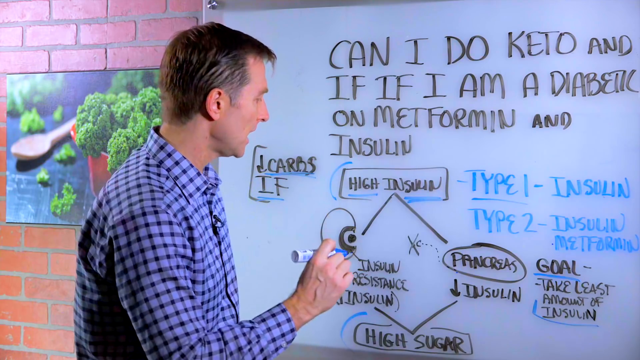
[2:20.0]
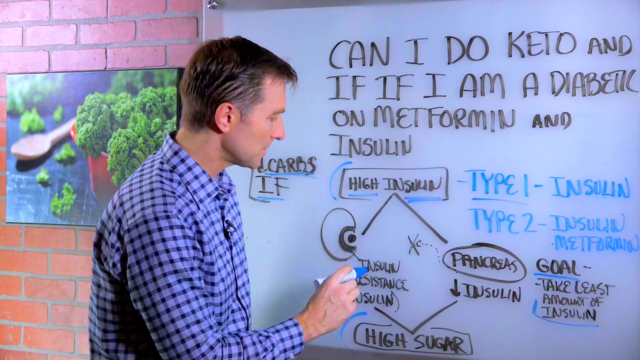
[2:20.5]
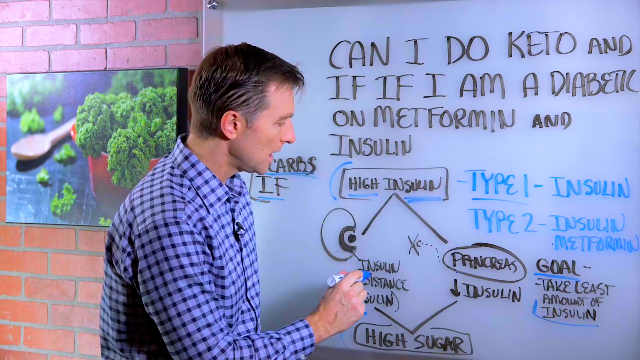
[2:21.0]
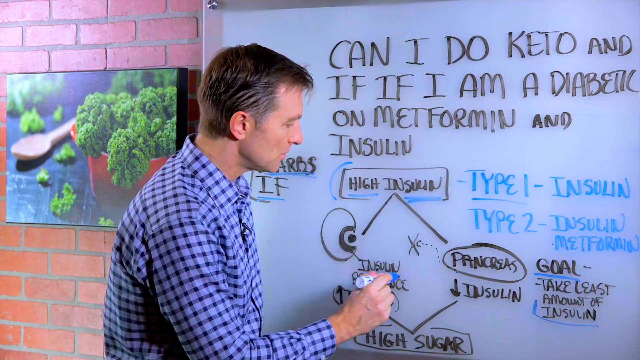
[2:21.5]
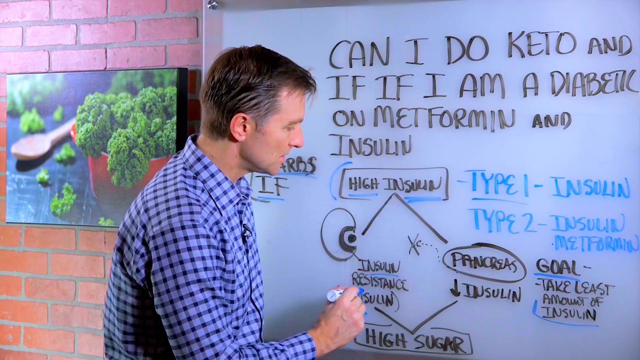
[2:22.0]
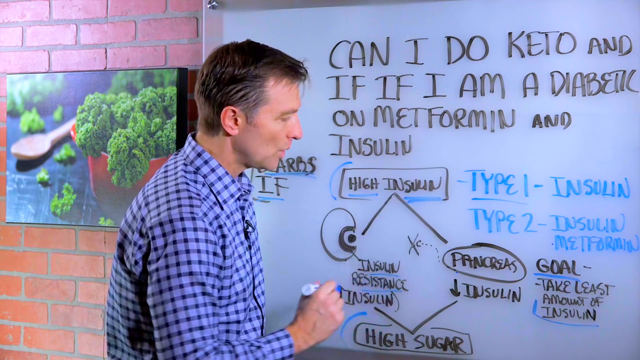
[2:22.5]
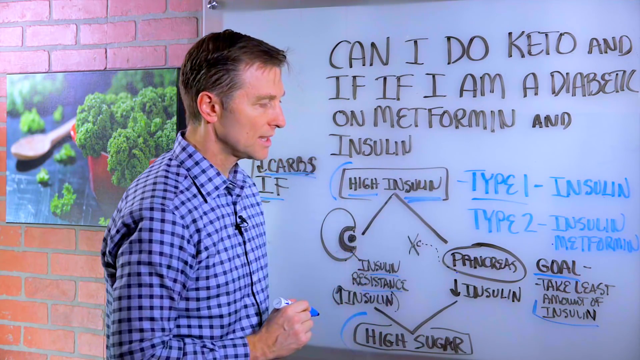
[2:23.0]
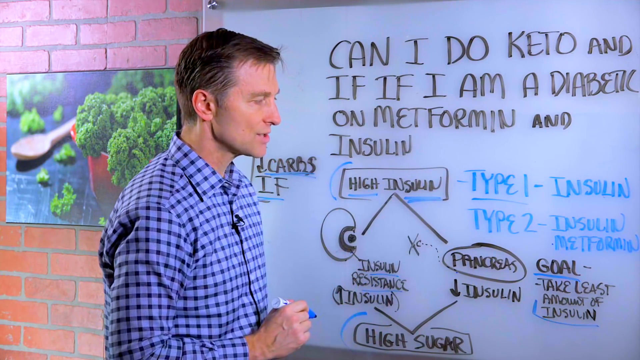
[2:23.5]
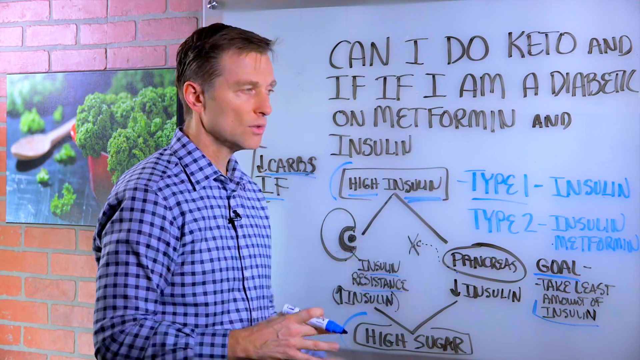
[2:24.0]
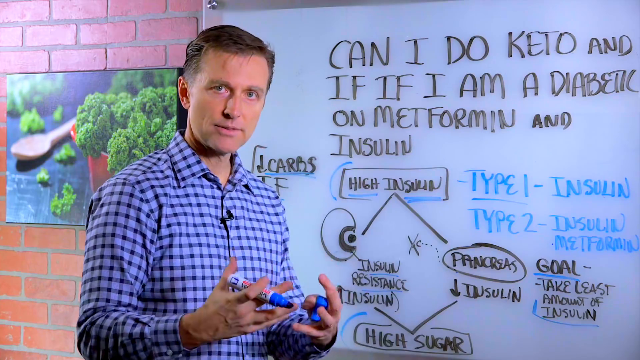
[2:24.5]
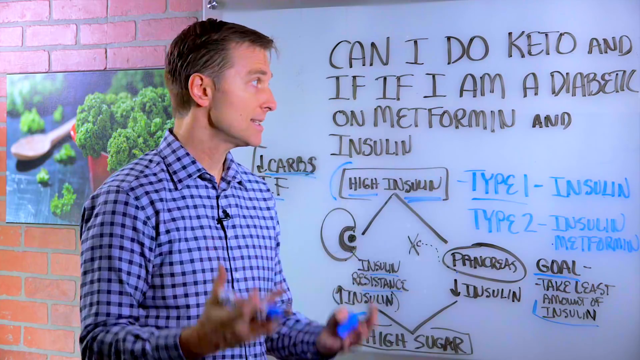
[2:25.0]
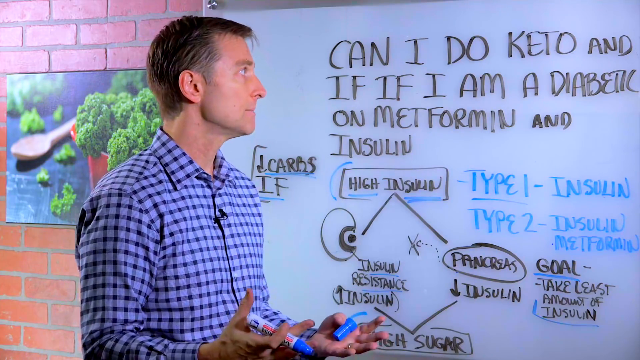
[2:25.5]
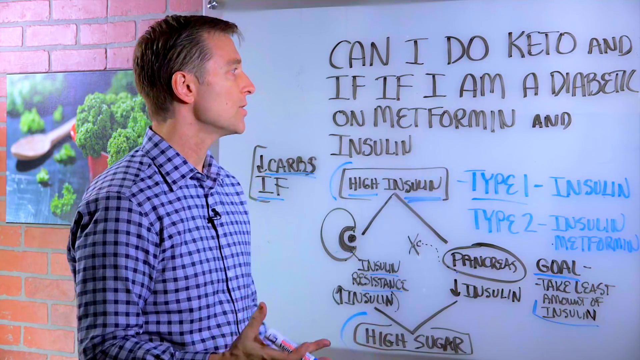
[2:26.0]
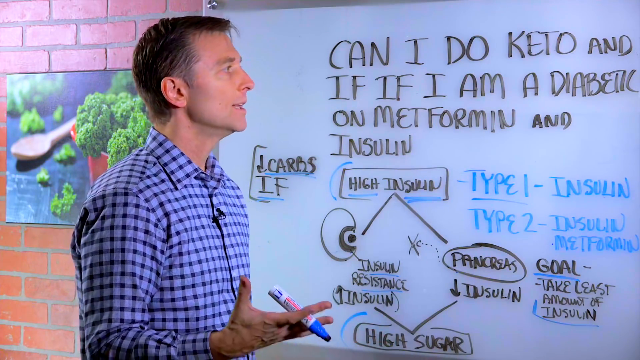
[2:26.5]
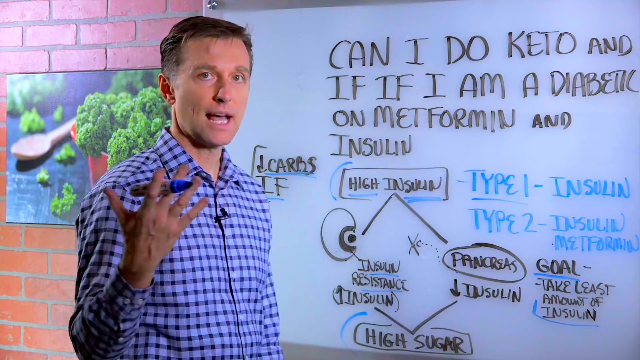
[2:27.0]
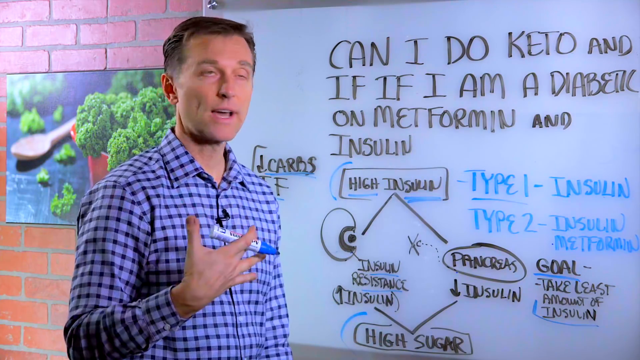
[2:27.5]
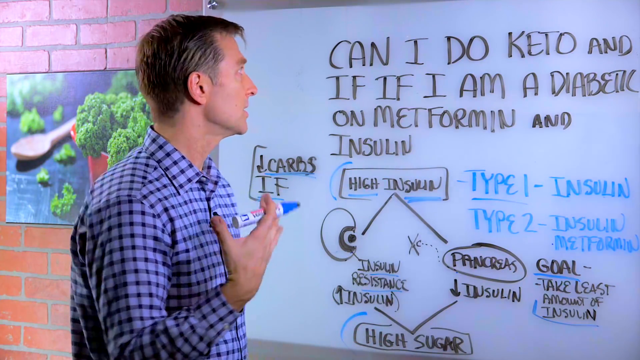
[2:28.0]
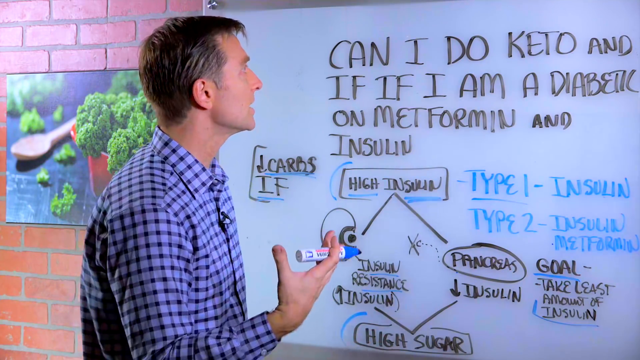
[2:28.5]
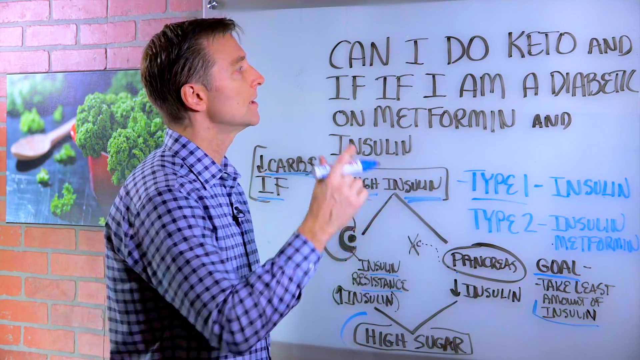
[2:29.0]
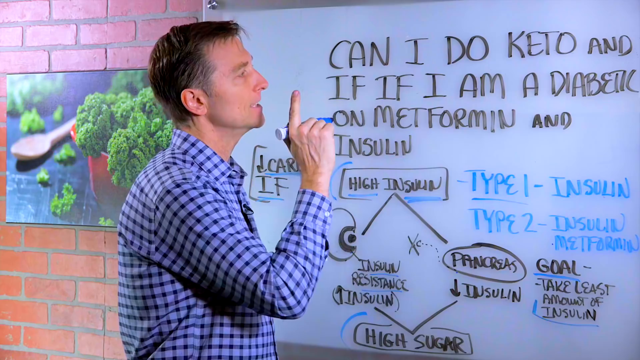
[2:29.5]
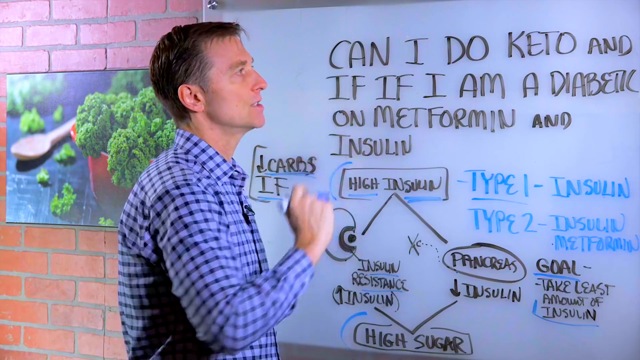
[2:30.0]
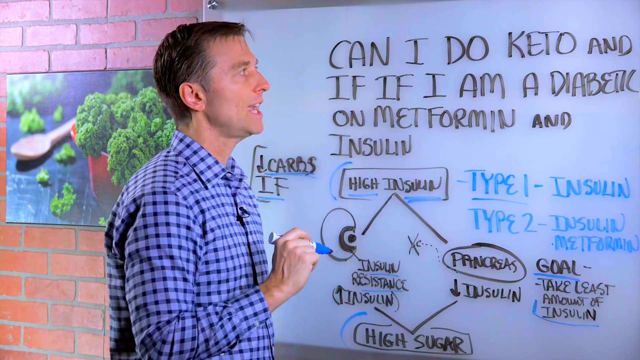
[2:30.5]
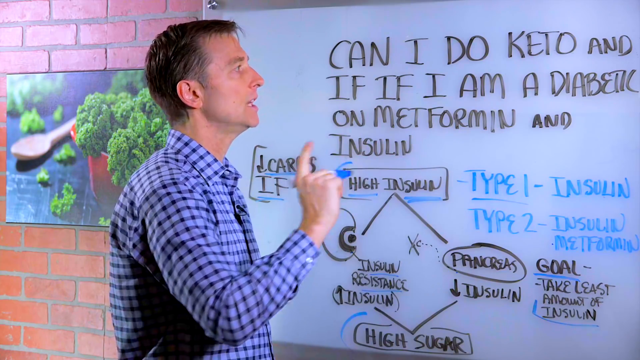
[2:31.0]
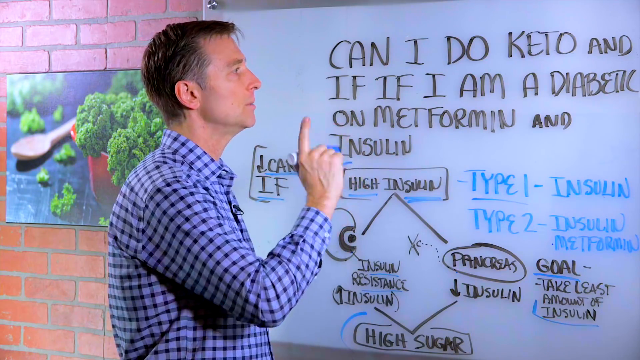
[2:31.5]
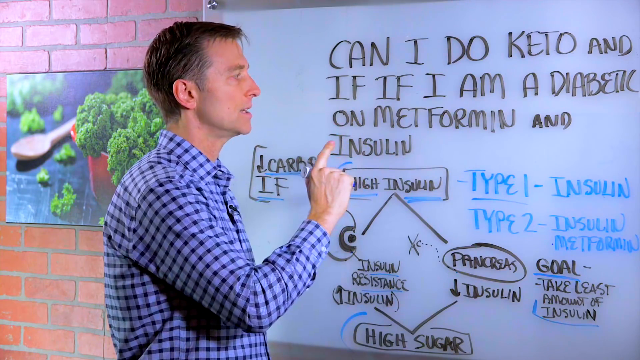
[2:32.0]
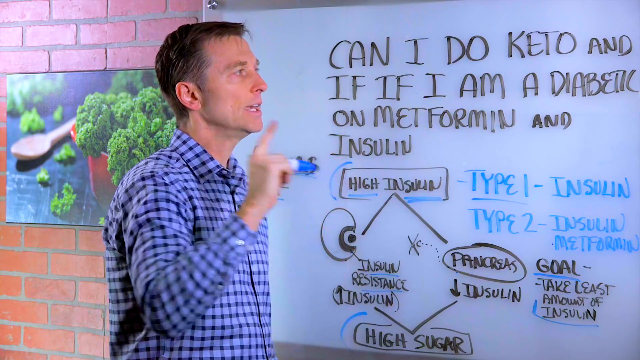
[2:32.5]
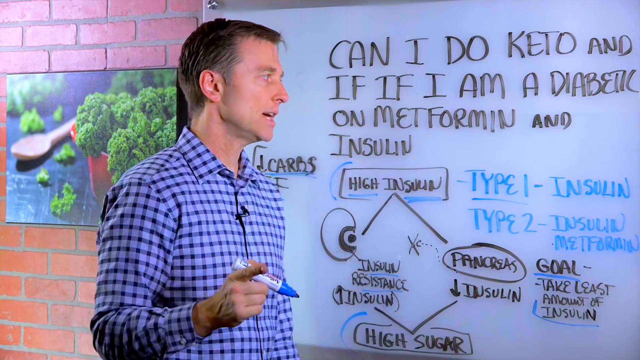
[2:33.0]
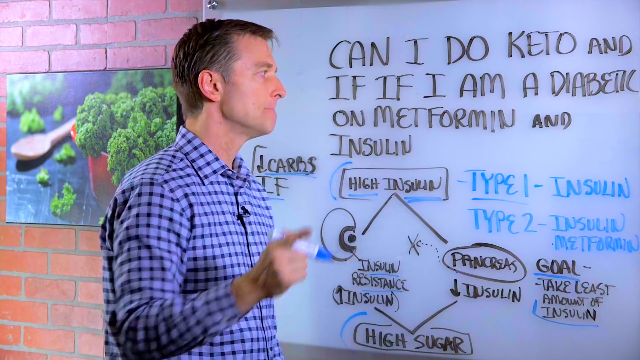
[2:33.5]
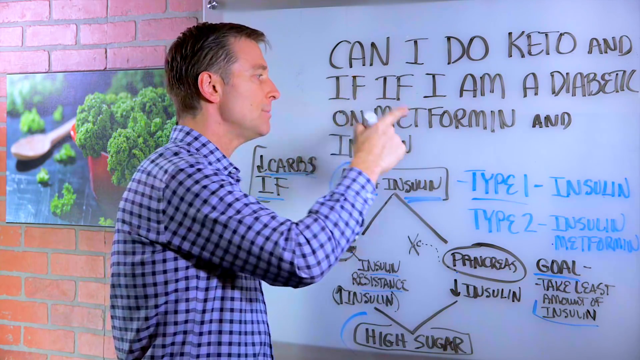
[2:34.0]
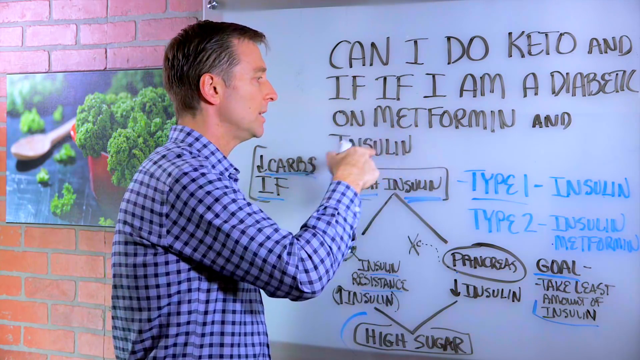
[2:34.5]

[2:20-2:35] Still holding the blue marker, the man underlines "insulin resistant" in the diagram, which connects to the pancreas, high sugar and insulin resistance. He then points to the question at the top about "can I do keto," pointing at the whiteboard without looking directly at the camera. He talks a lot with his hands, the marker still in hand as if he will mark up the board again.